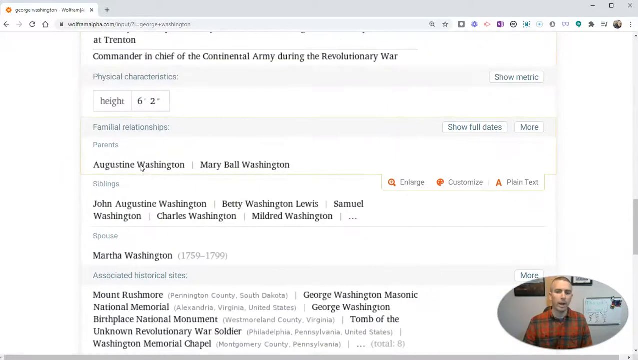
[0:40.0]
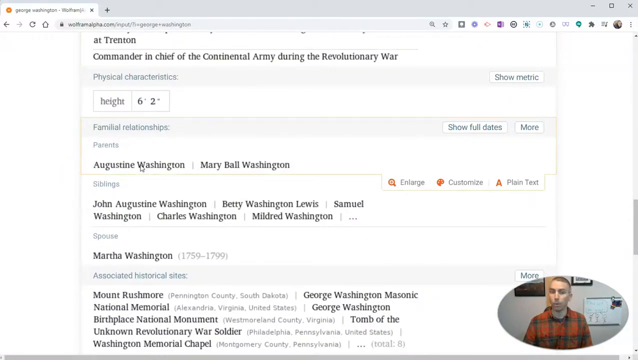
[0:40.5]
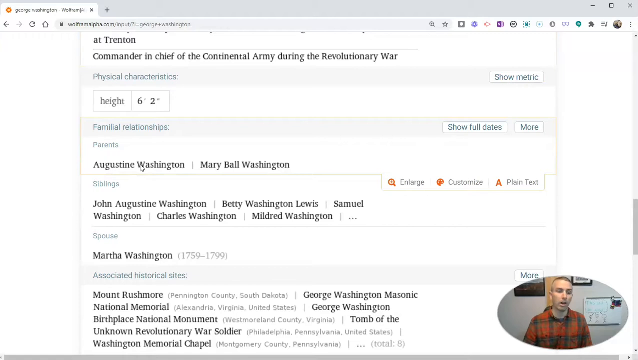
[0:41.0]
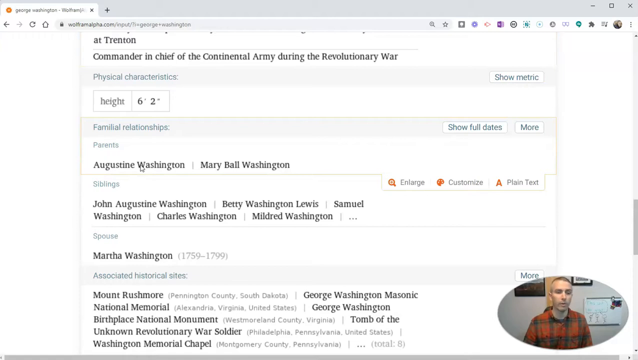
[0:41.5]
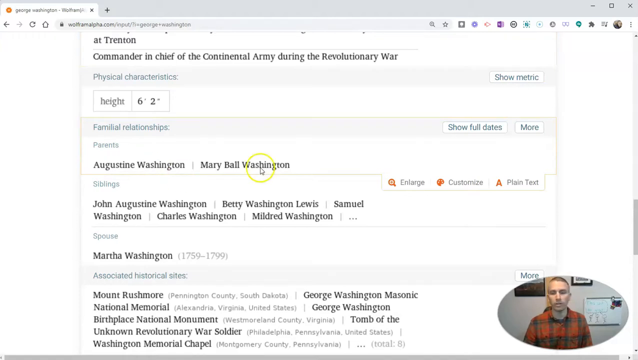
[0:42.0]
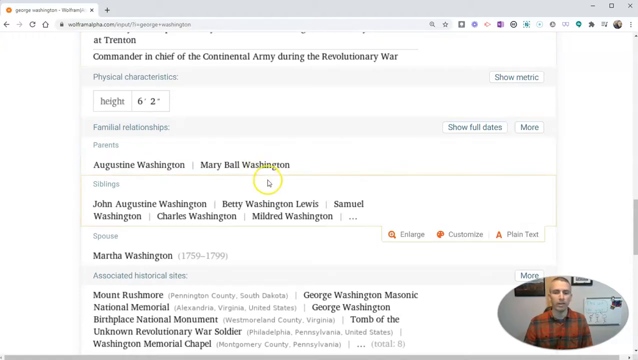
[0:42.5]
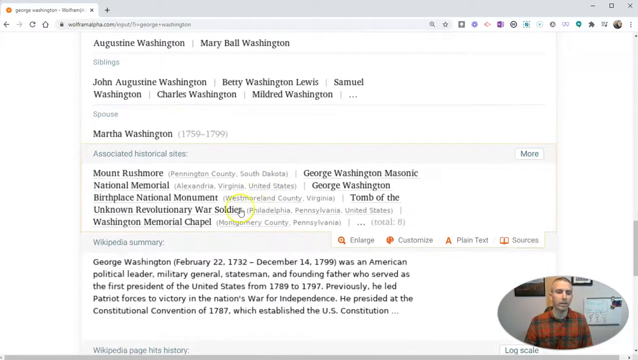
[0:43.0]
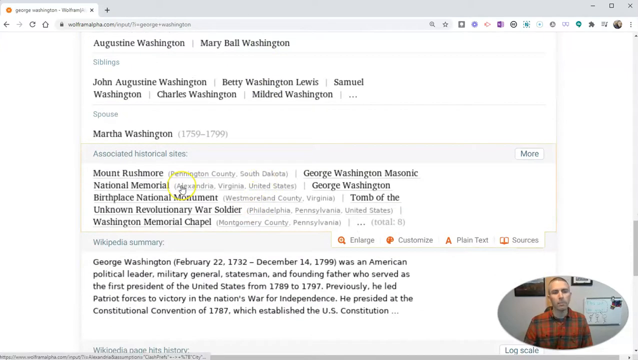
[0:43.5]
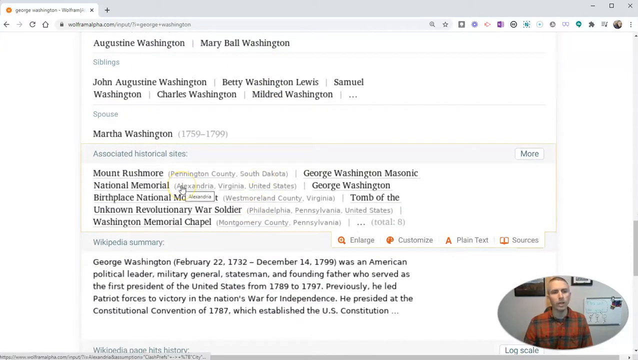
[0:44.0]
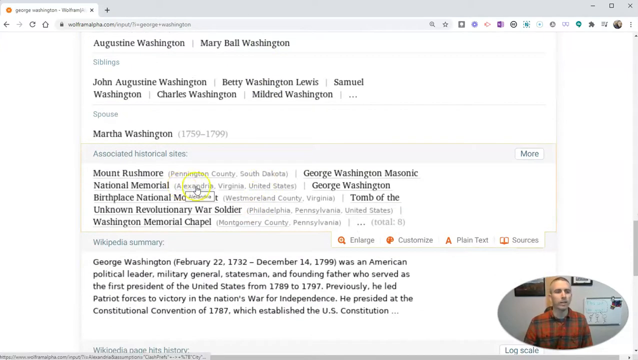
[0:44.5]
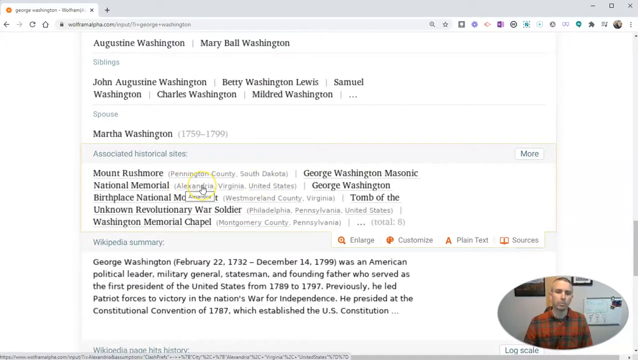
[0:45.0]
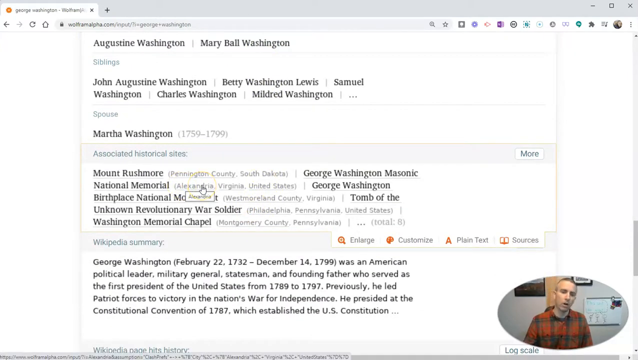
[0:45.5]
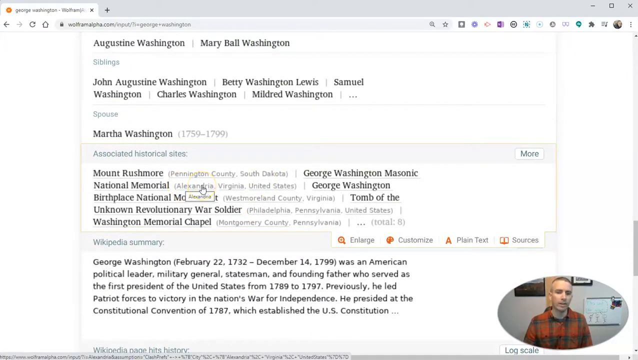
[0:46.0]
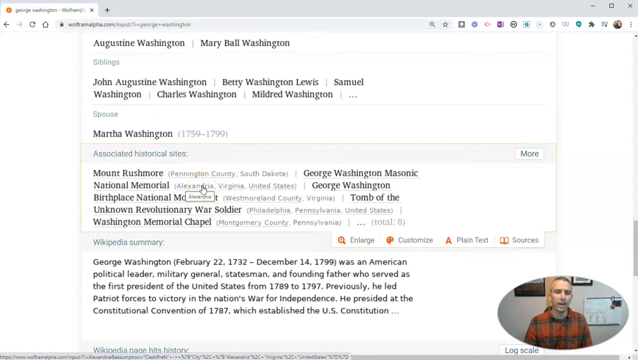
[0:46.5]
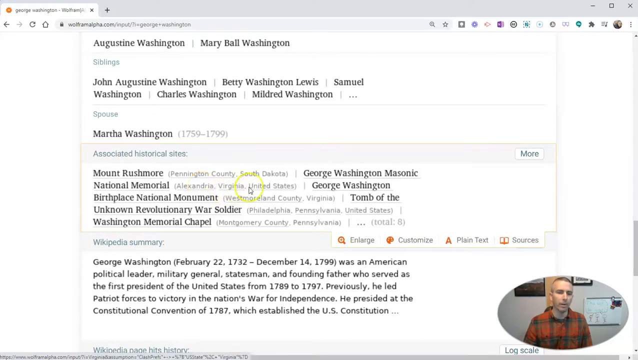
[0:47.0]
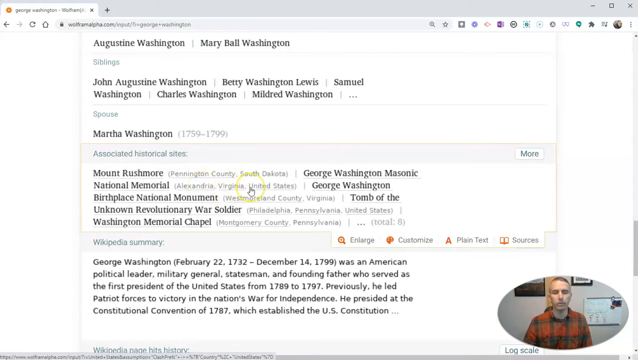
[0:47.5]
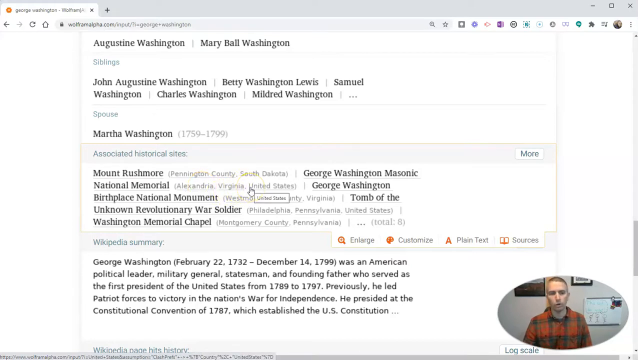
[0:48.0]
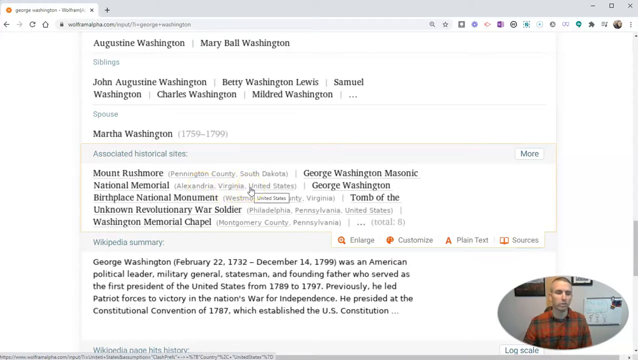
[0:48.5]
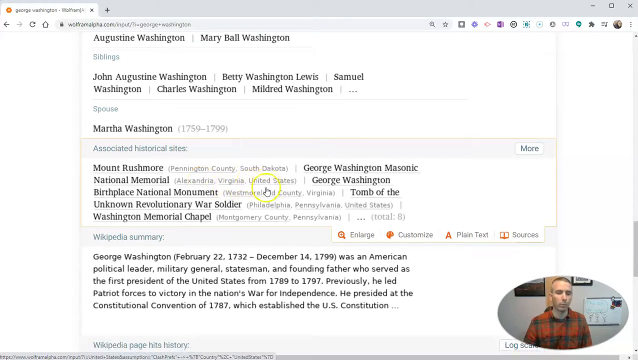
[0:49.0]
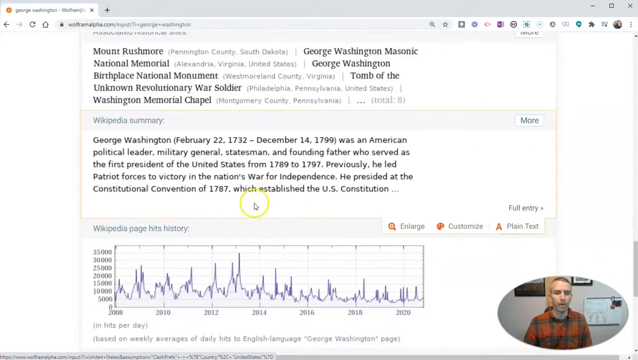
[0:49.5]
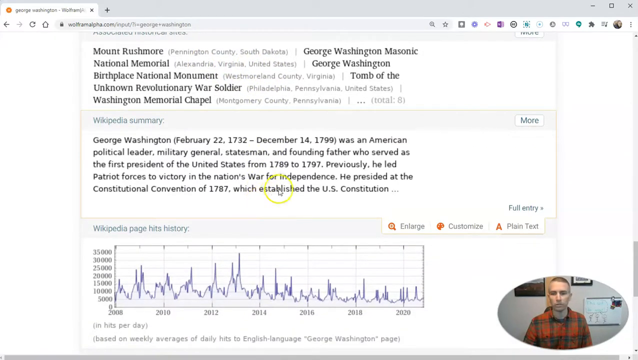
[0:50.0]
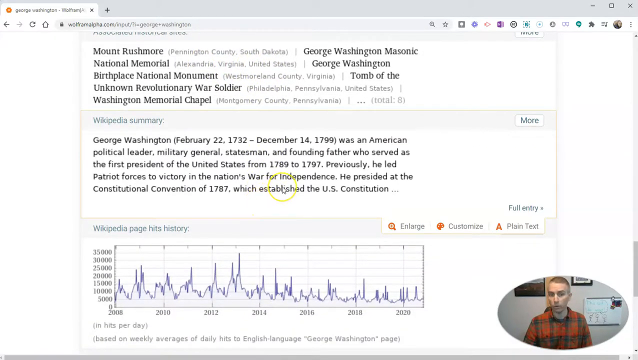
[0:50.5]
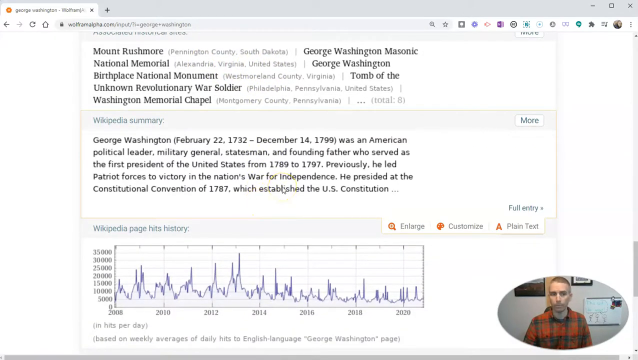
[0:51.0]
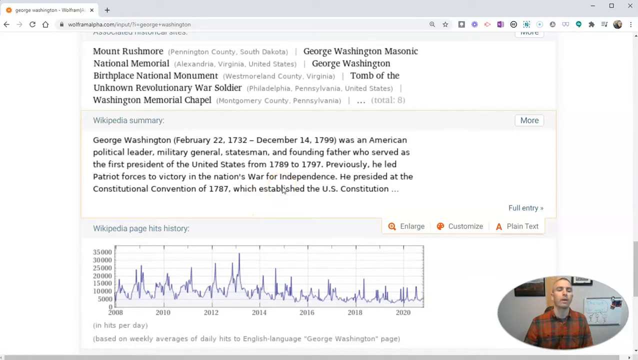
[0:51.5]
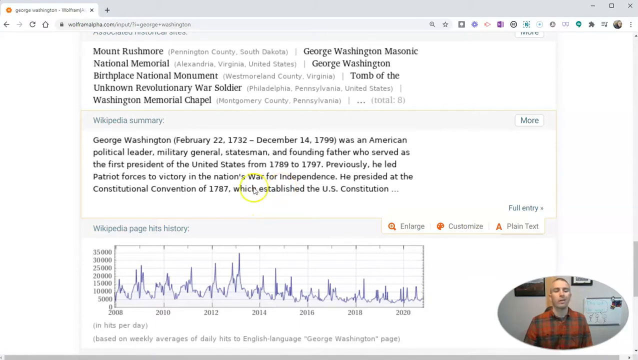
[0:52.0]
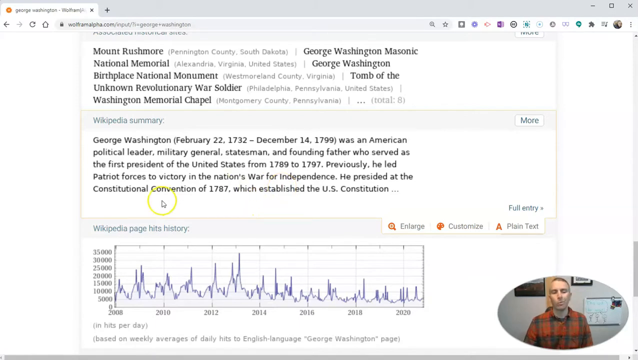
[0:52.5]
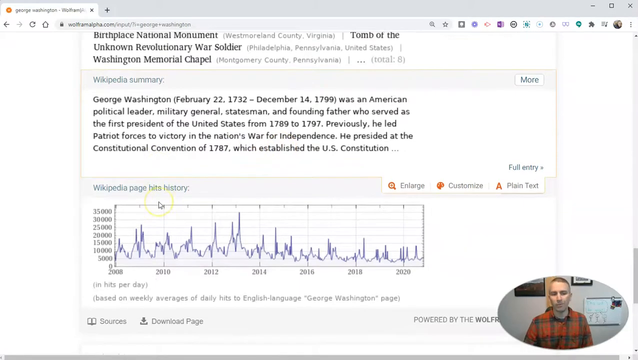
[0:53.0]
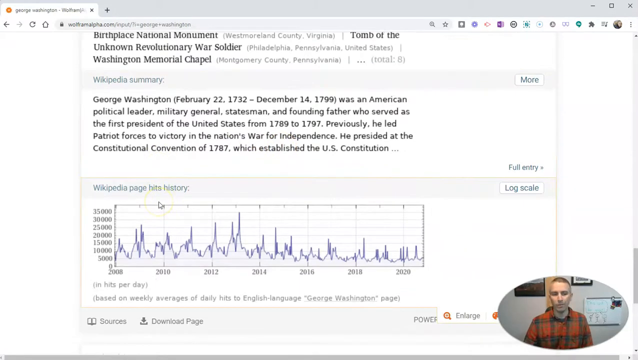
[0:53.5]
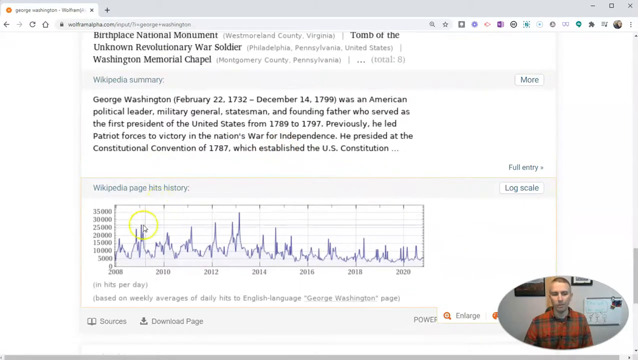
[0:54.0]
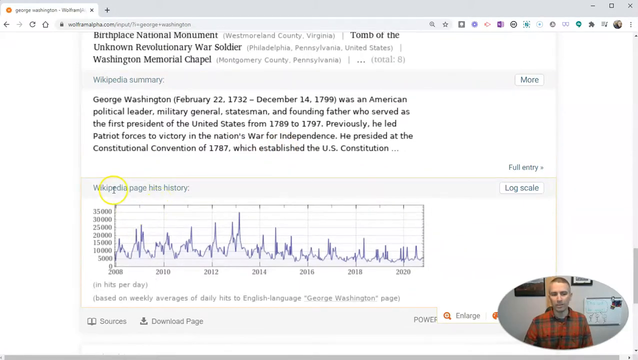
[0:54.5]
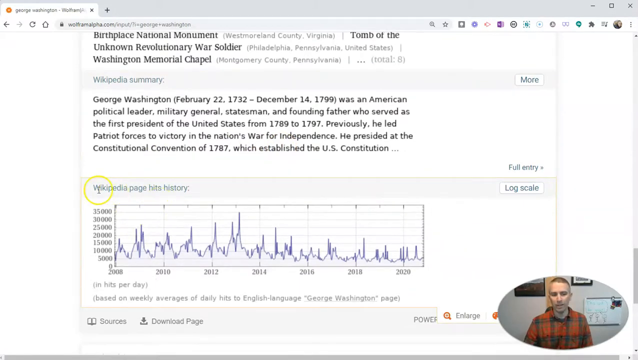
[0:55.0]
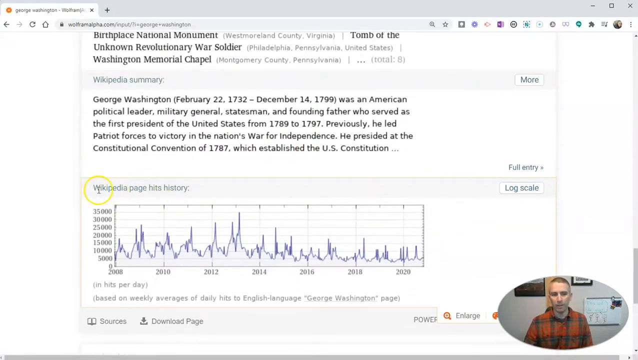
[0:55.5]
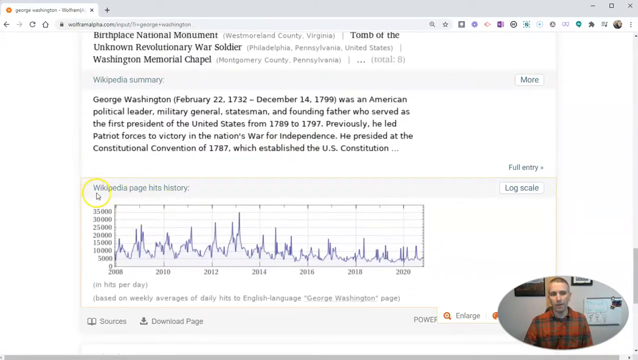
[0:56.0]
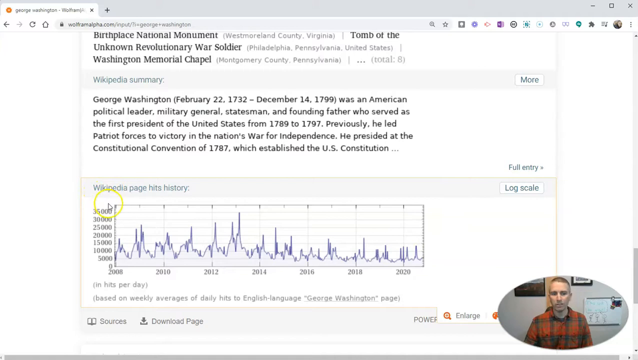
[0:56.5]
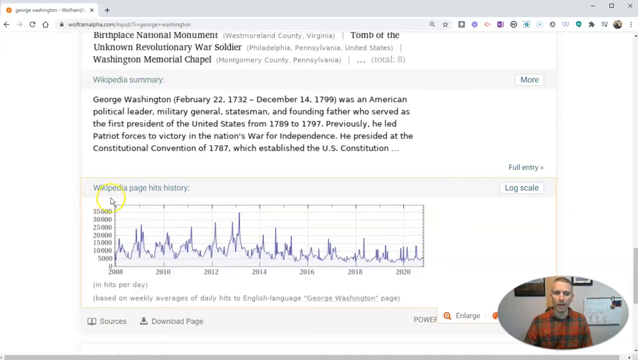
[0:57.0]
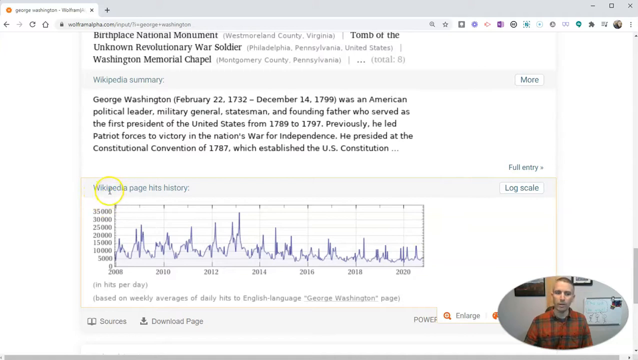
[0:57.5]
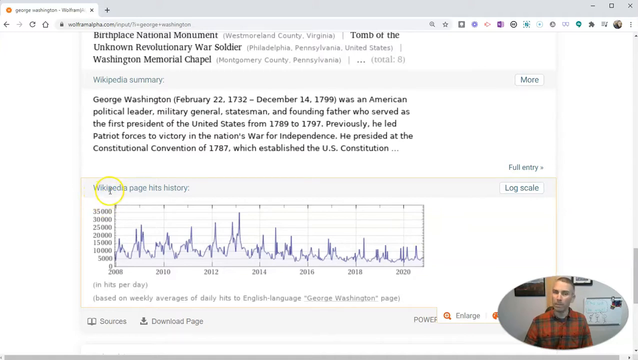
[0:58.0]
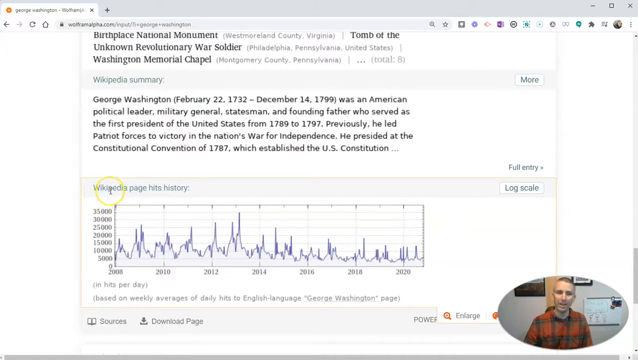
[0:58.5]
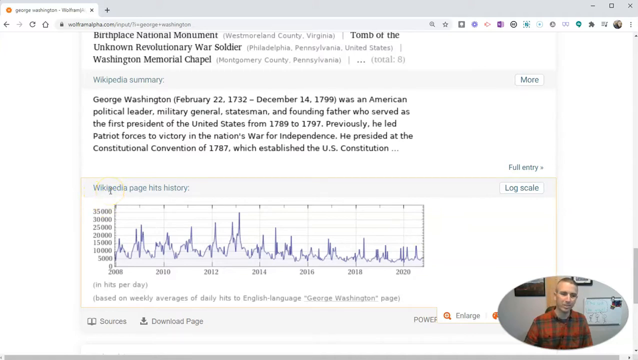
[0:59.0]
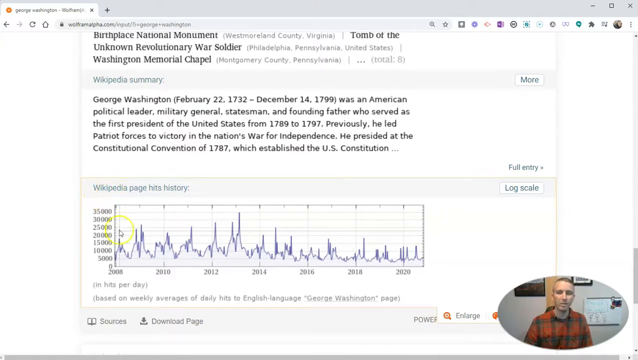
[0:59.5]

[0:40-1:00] On the Wolfram Alpha results for George Washington, the mouse pointer is in the middle of the page after scrolling down. It hovers over Augustine Washington, then moves from left to right next to National Memorial, where the location reads Alexandria, Virginia, United States. The user scrolls further down to the Wikipedia summary and moves the cursor around it, then reaches the Wikipedia page hits history graph for George Washington. The chart's lowest value is 0 and the visible scale goes up to 35,000, though it may extend to 40,000 off the visible area. The cursor hovers over the chart and moves from left to right across it.